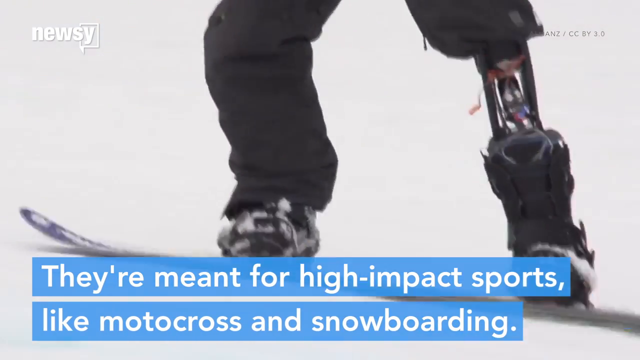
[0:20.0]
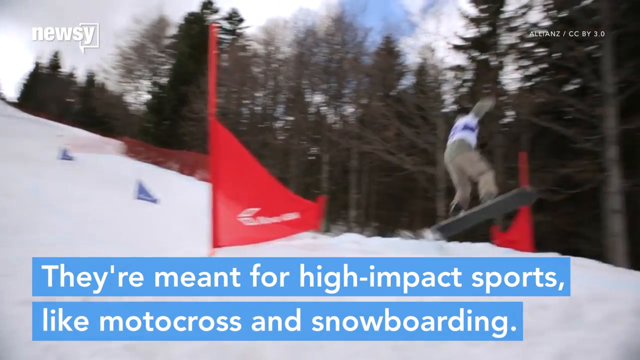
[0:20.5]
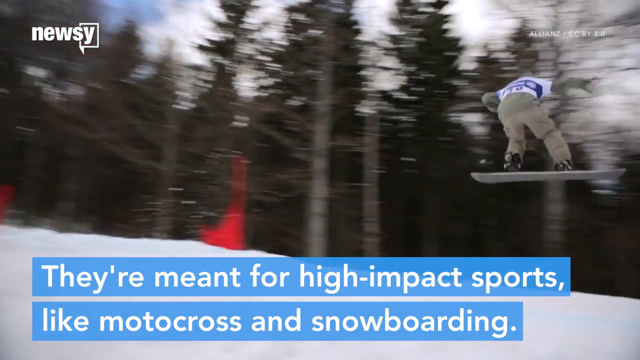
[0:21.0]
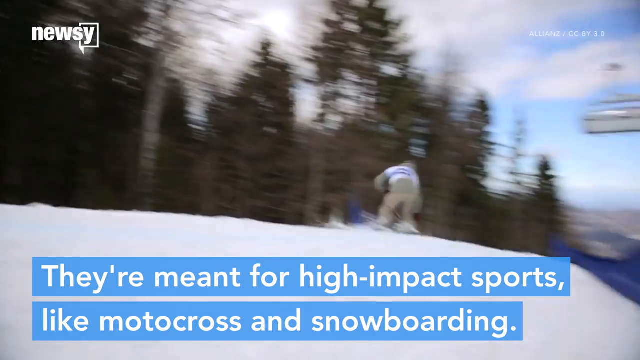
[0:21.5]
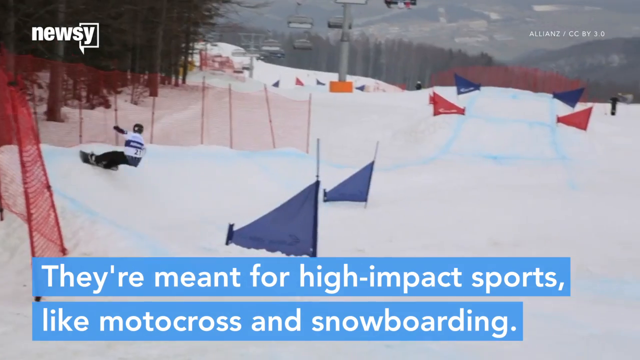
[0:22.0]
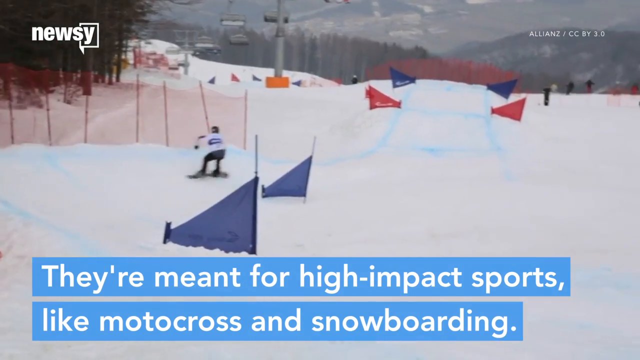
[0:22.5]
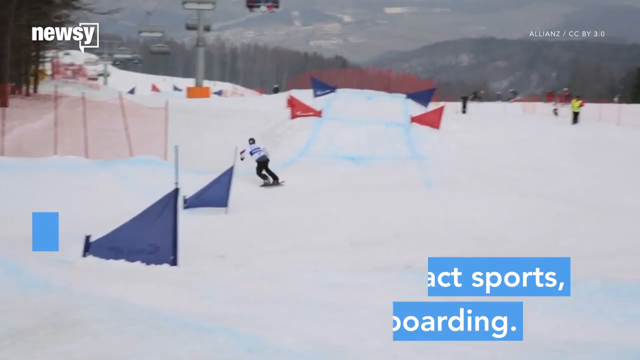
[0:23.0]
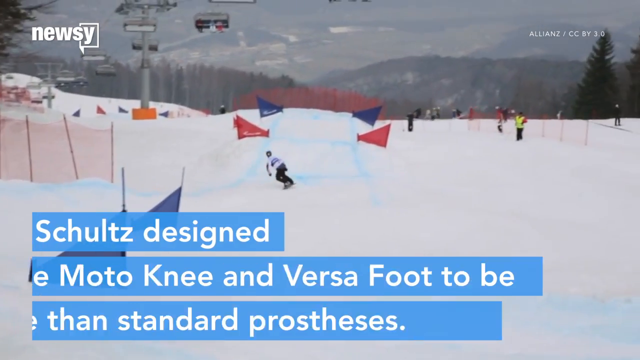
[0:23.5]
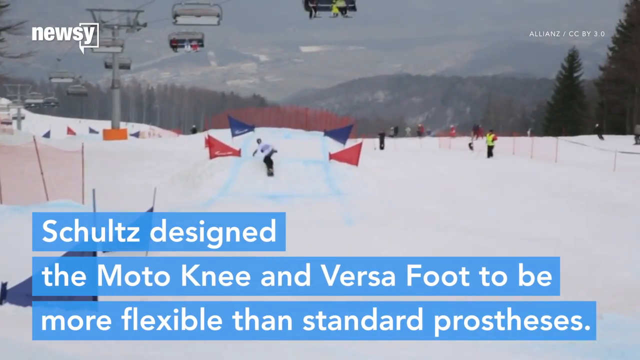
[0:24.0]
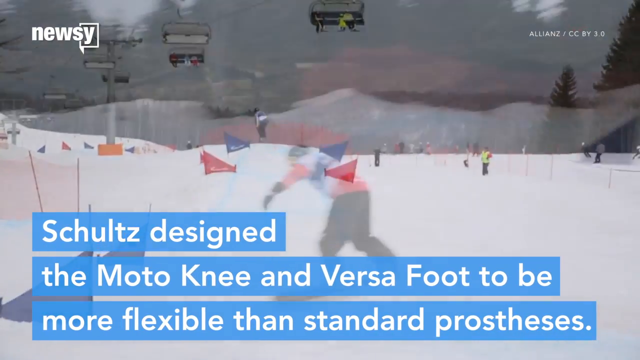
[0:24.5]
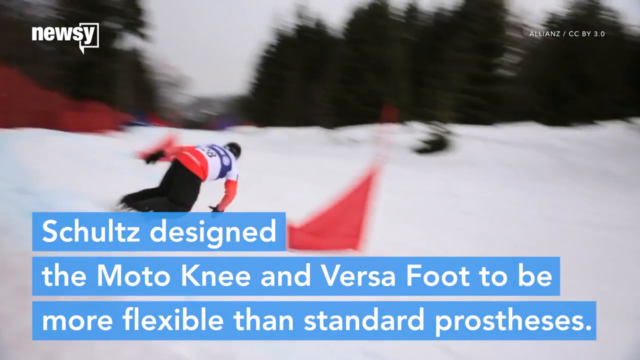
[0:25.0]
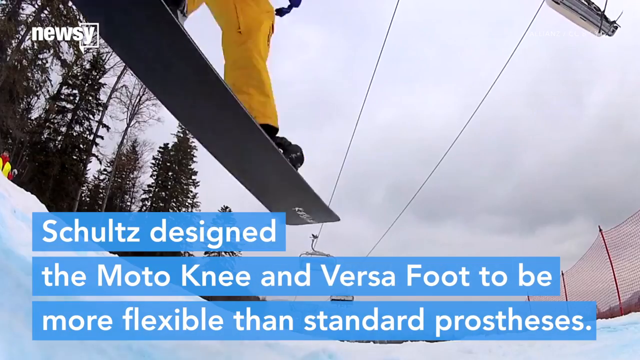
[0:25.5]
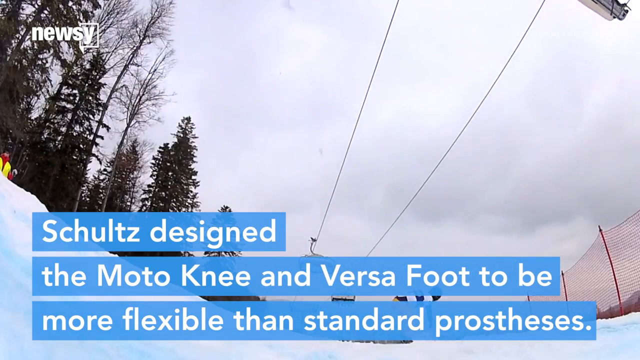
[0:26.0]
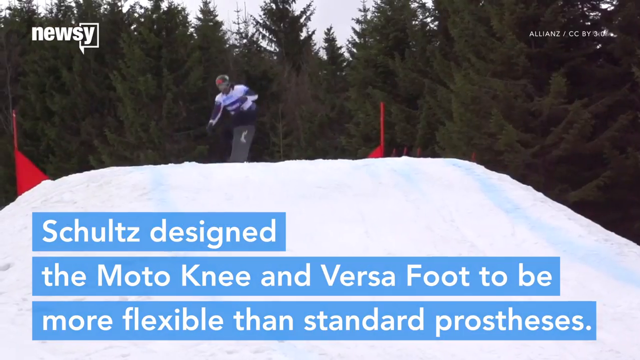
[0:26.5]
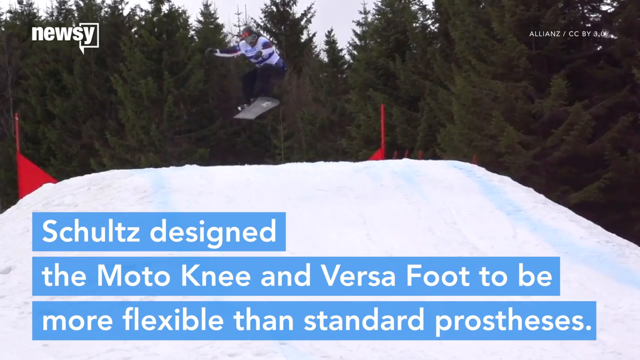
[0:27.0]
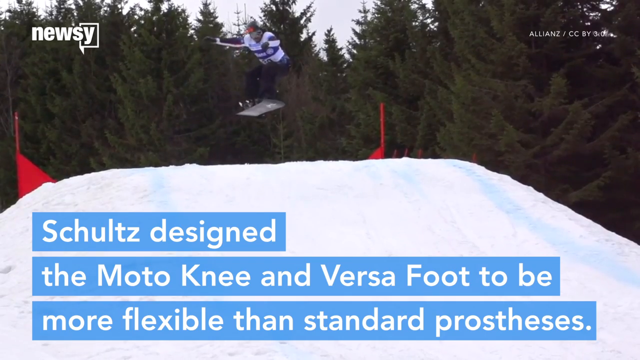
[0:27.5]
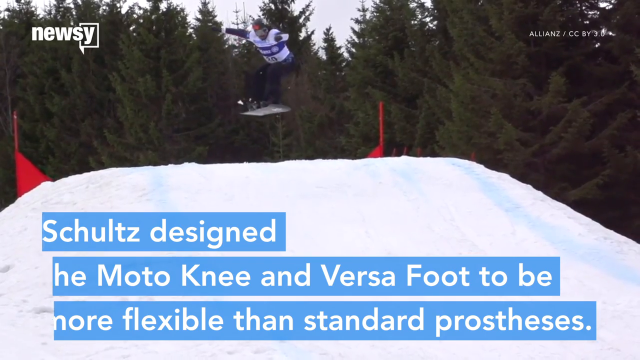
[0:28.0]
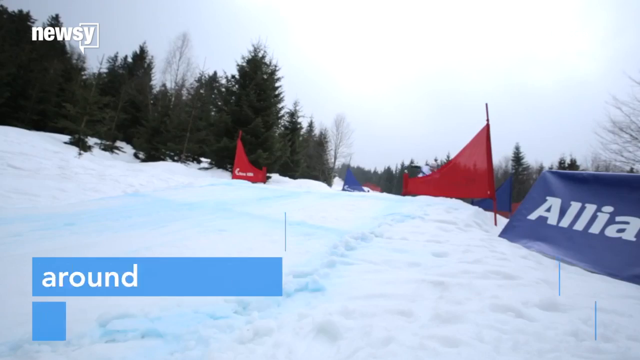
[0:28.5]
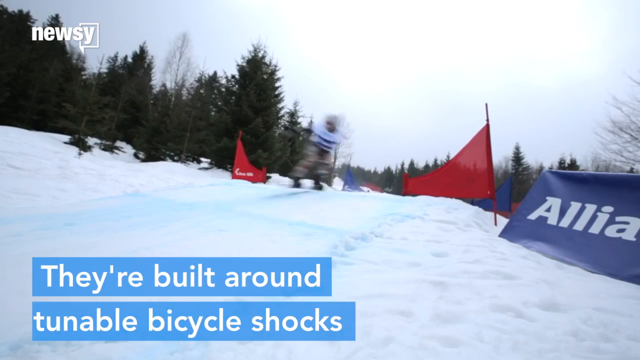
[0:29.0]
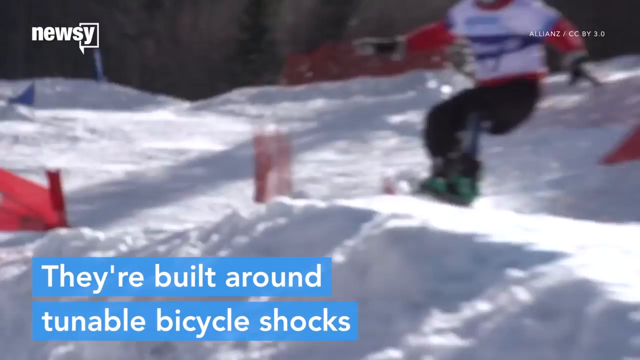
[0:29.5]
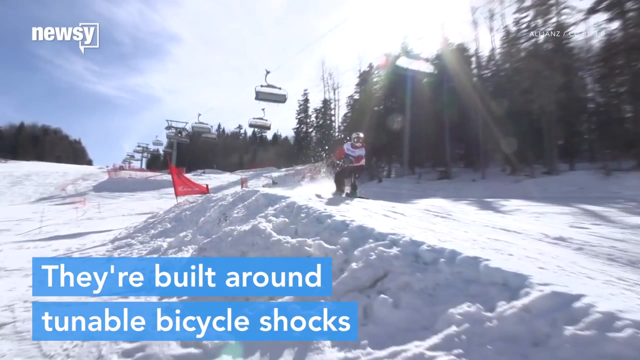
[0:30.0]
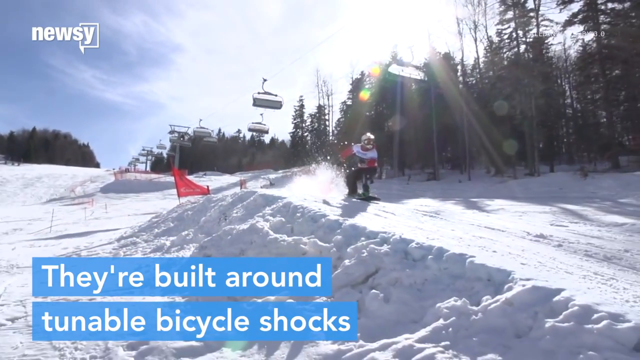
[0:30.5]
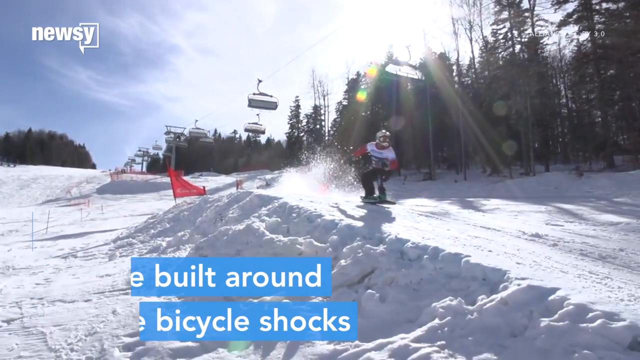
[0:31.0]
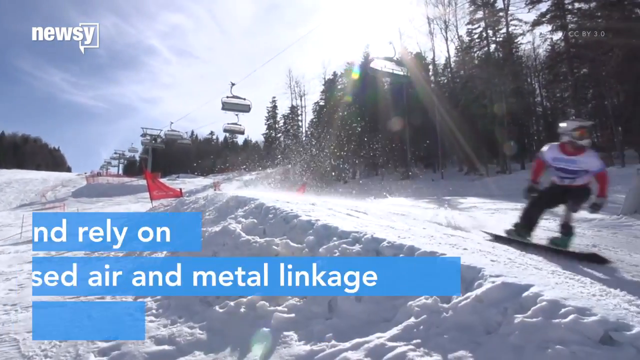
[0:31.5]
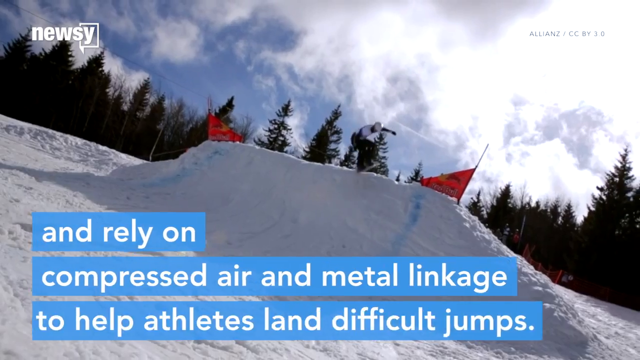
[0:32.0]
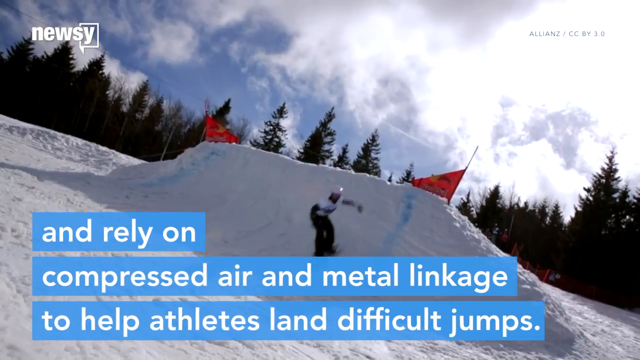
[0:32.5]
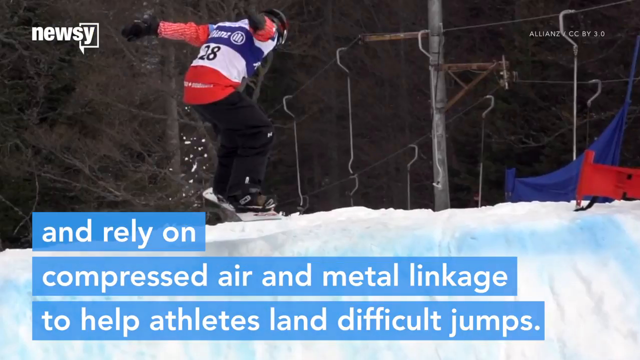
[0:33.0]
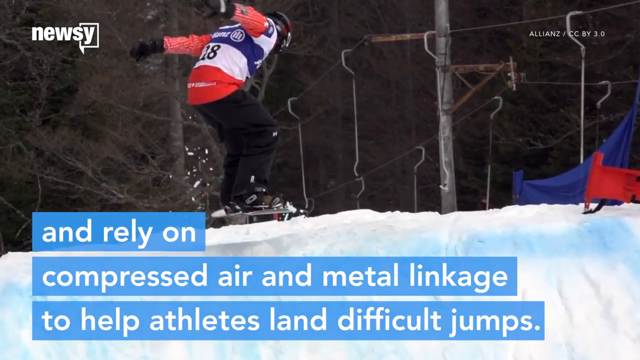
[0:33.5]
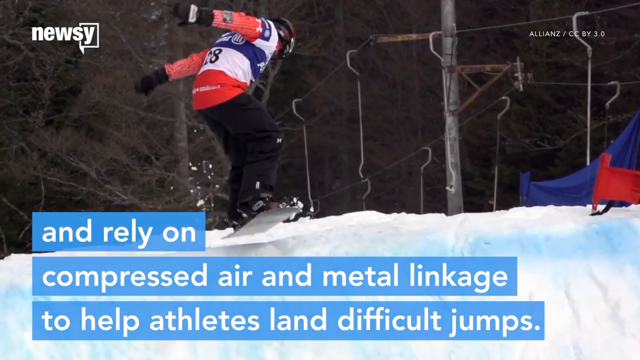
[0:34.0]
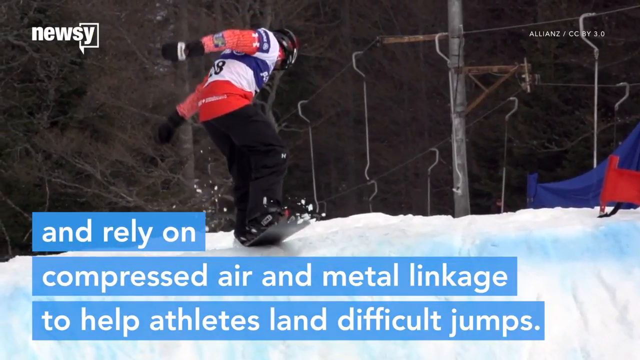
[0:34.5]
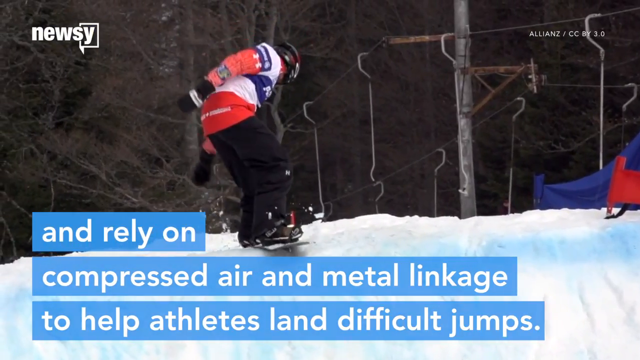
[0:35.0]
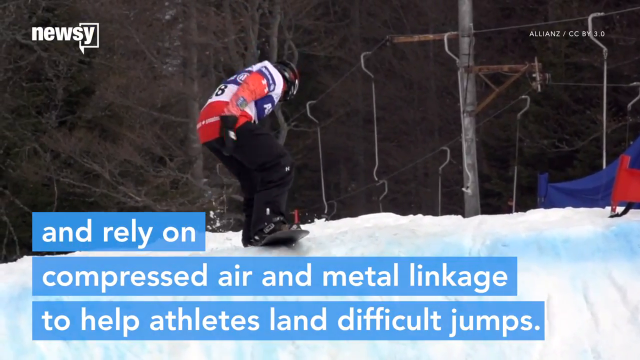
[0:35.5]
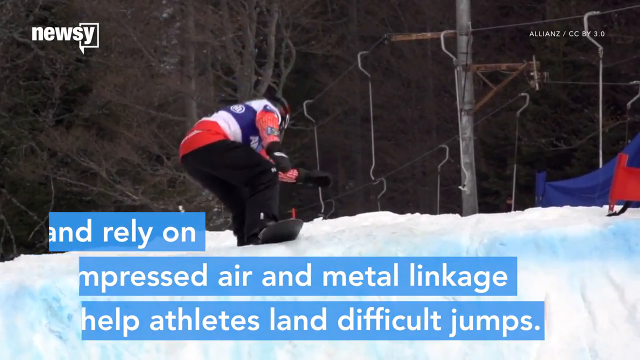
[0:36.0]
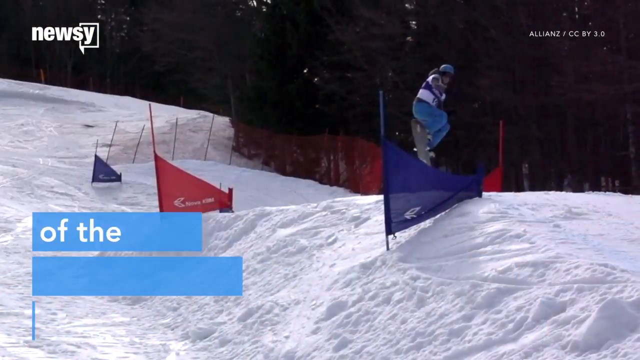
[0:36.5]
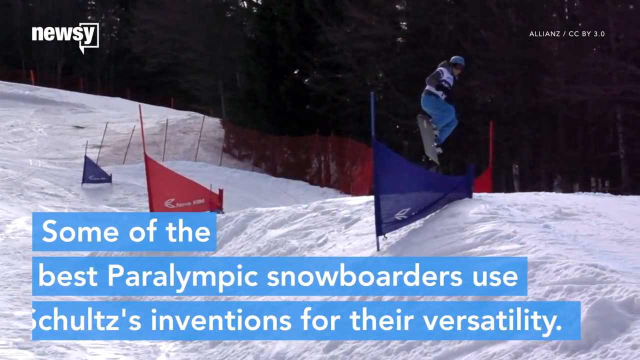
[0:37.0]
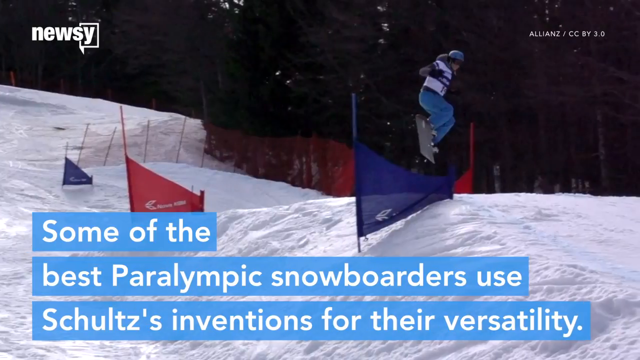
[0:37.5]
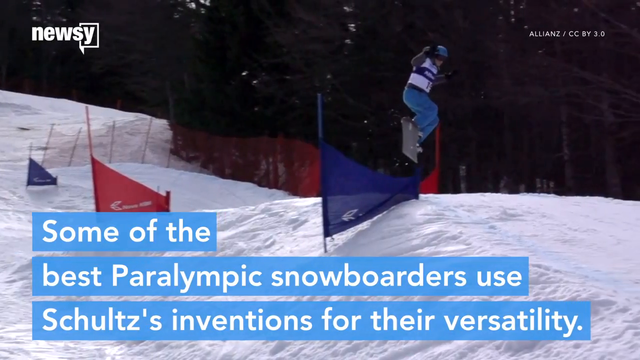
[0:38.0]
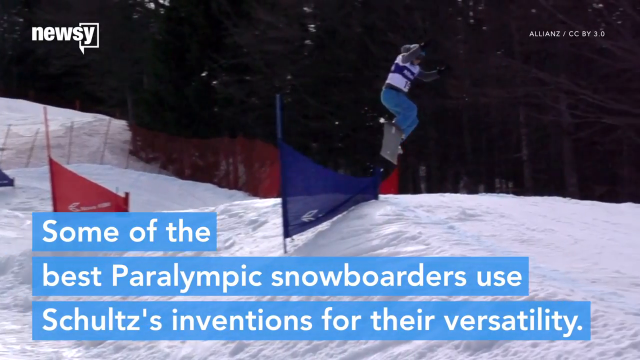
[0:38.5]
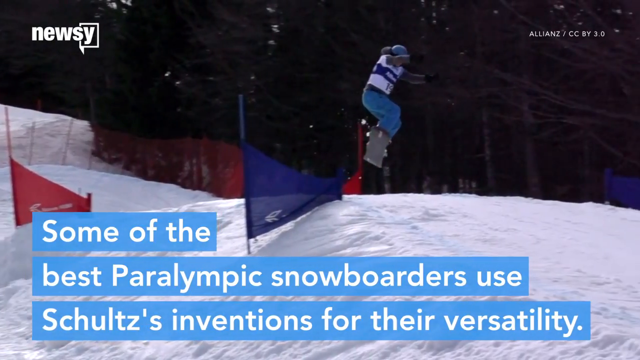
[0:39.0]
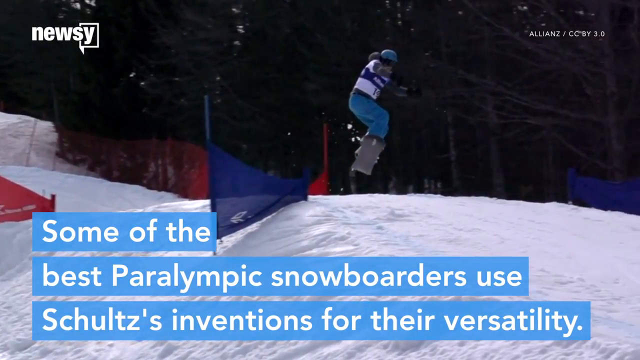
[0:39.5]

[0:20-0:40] A NewsY watermark is in the top left corner of the screen. The shot shows the legs of U.S. Paralympic snowboarder Mike Schultz: his left leg was amputated, and he has a prosthetic leg attached to a snow ski. At the bottom, white lettering on a blue background reads "They're meant for high impact sports like motocross and snowboarding." Then a person is shown snowboarding and jumping in the air, then going around a course downhill. Text reads "Schultz designed the moto knee and the versa foot to be more flexible than the standard prosthesis."